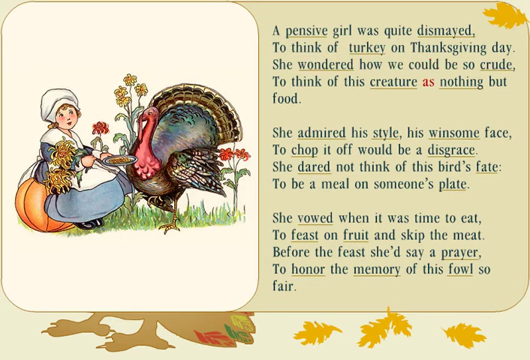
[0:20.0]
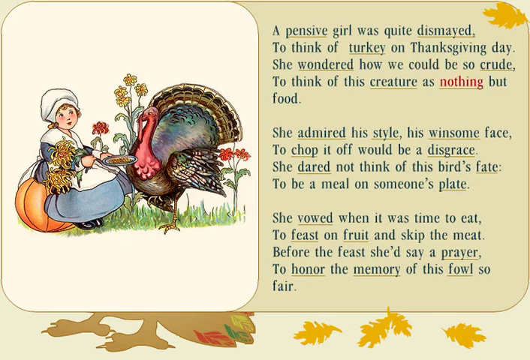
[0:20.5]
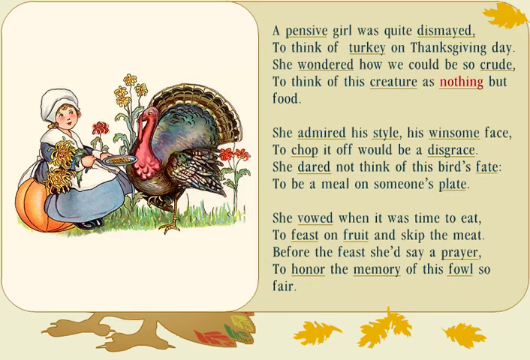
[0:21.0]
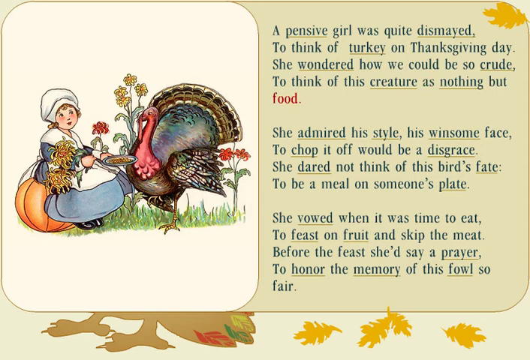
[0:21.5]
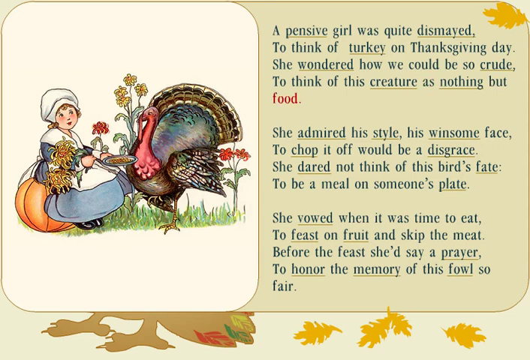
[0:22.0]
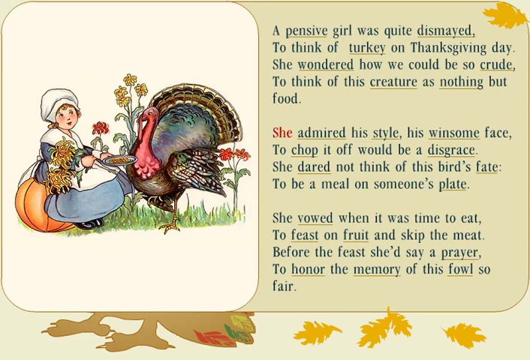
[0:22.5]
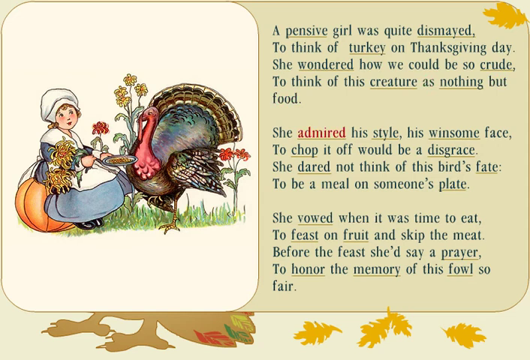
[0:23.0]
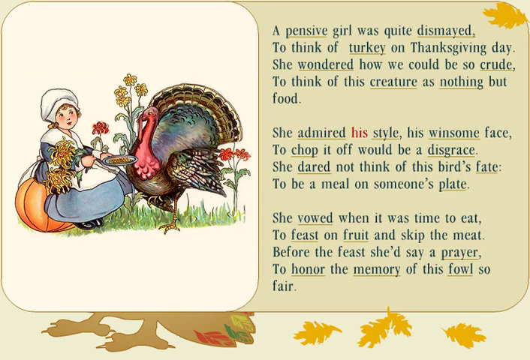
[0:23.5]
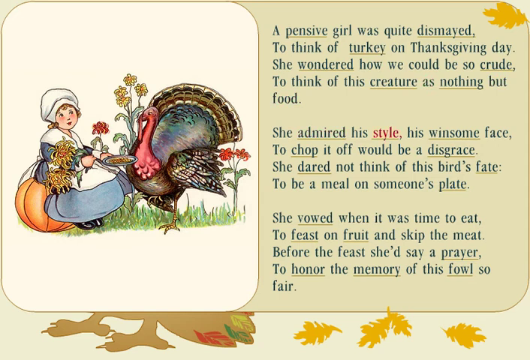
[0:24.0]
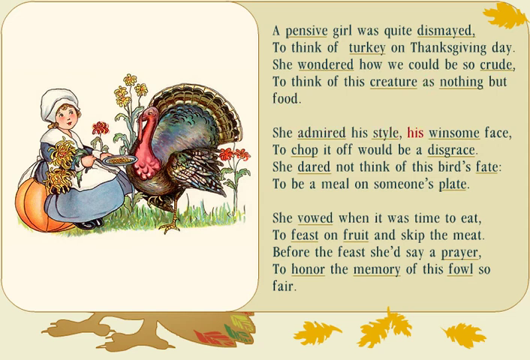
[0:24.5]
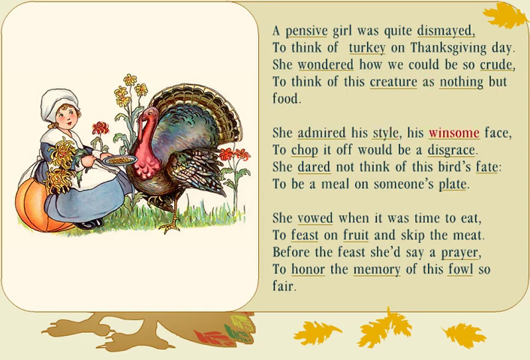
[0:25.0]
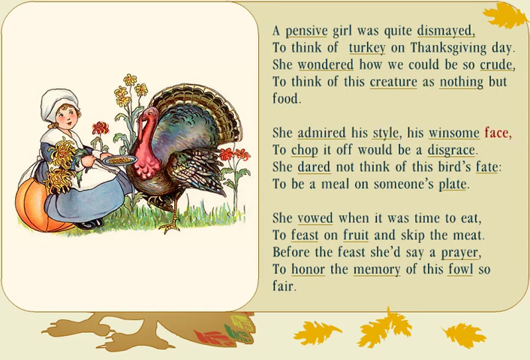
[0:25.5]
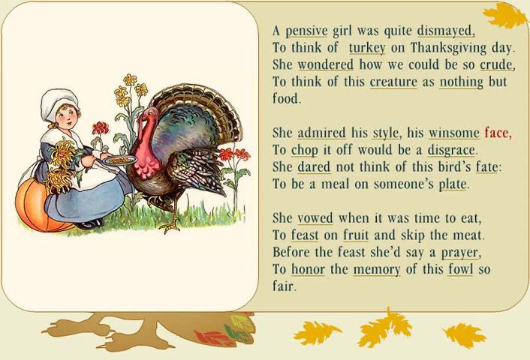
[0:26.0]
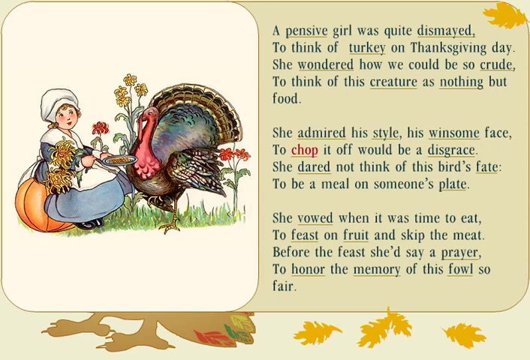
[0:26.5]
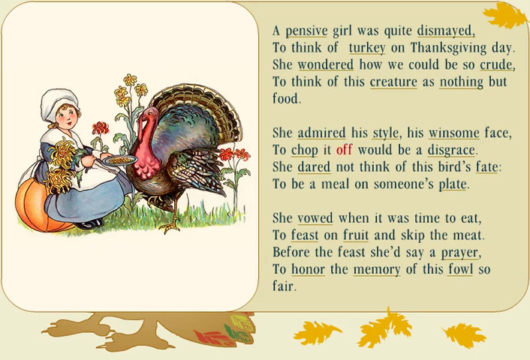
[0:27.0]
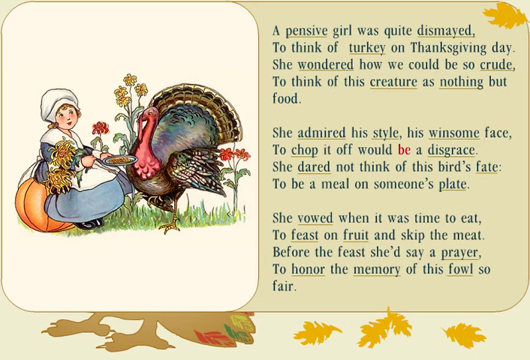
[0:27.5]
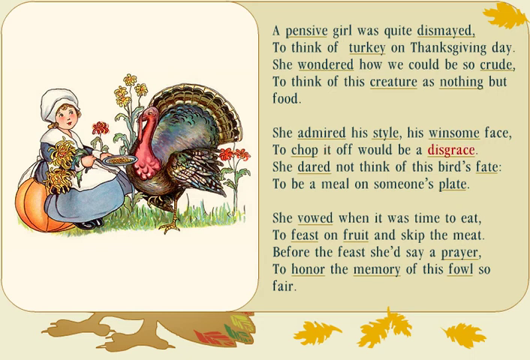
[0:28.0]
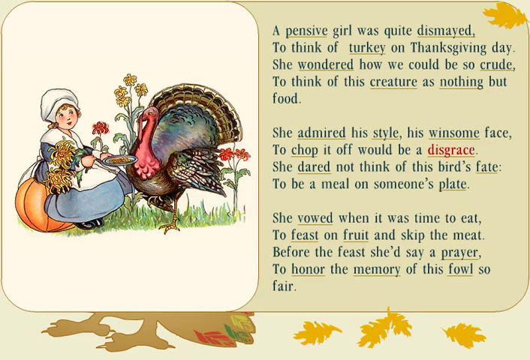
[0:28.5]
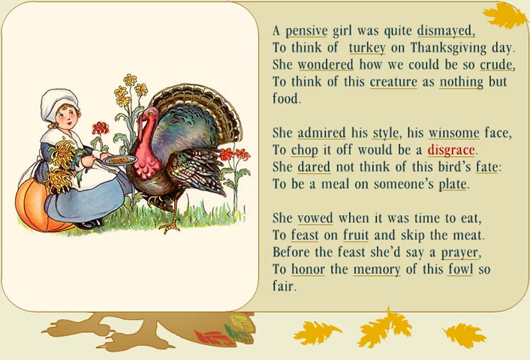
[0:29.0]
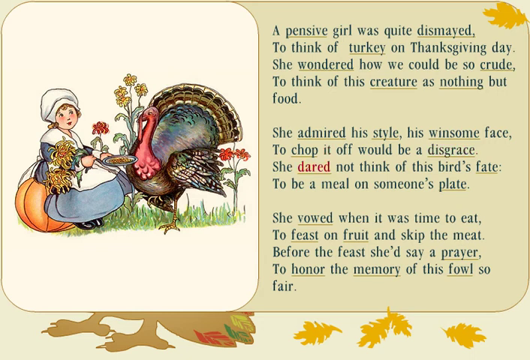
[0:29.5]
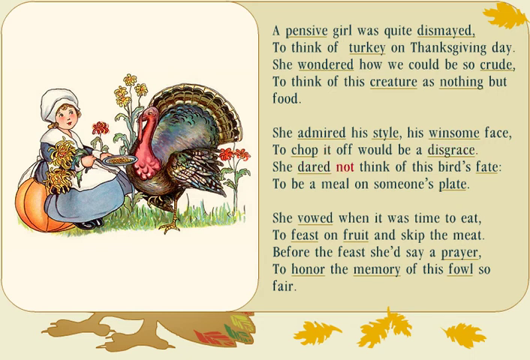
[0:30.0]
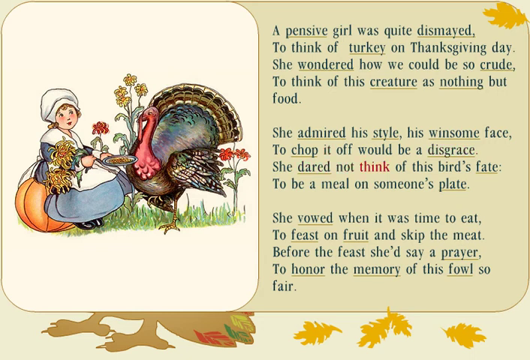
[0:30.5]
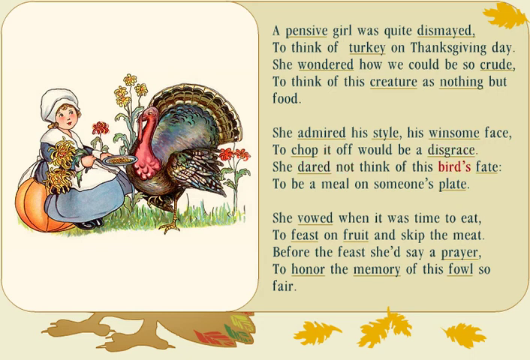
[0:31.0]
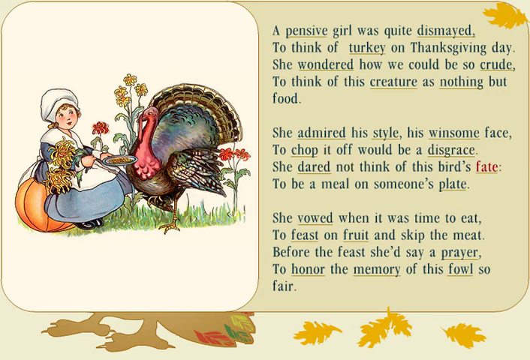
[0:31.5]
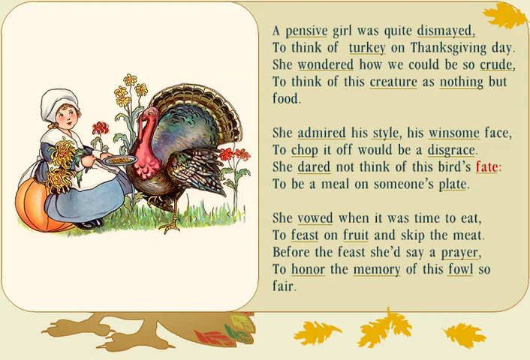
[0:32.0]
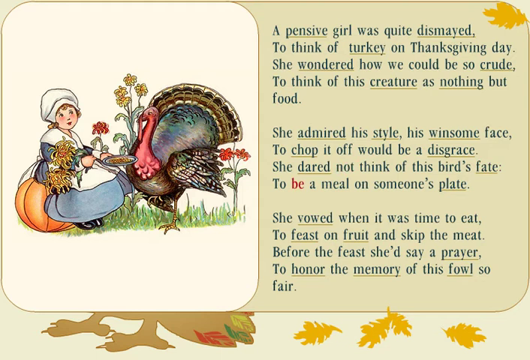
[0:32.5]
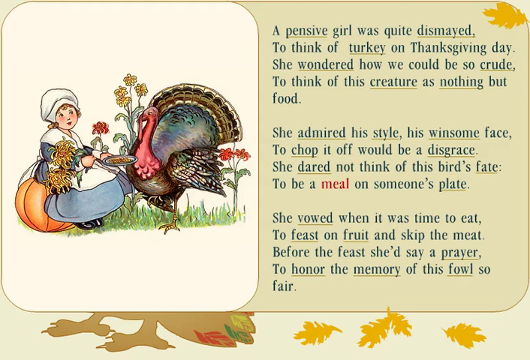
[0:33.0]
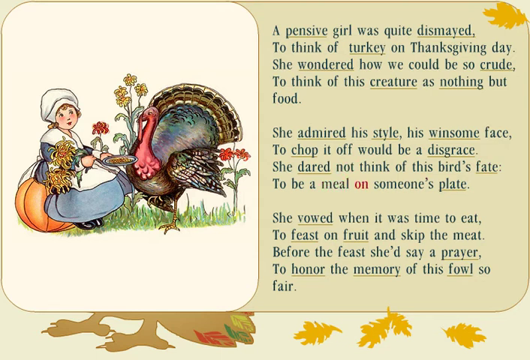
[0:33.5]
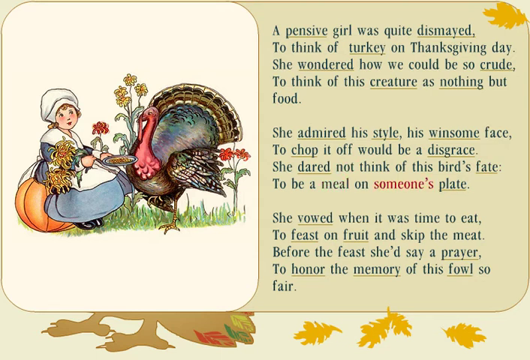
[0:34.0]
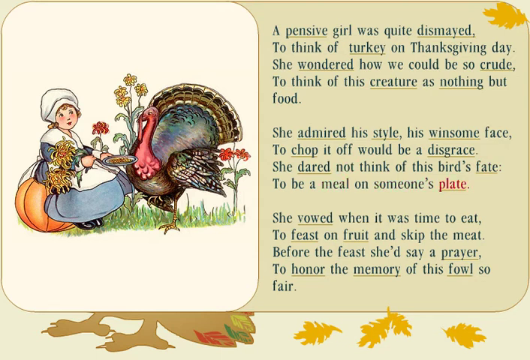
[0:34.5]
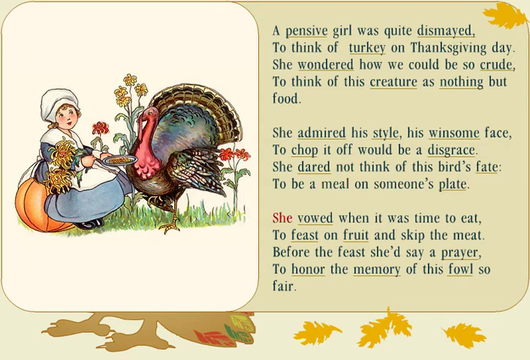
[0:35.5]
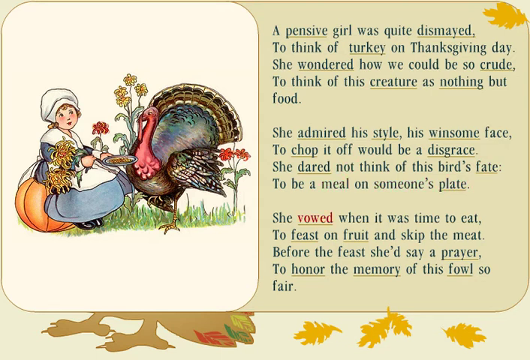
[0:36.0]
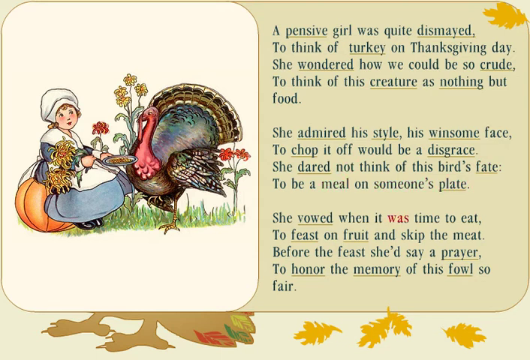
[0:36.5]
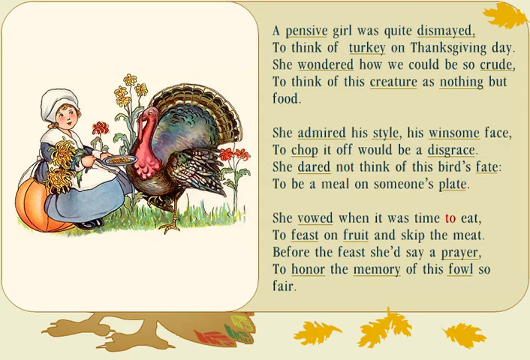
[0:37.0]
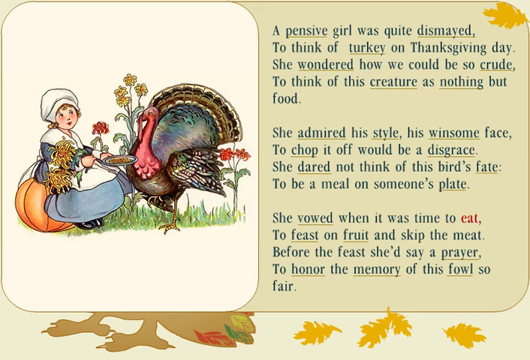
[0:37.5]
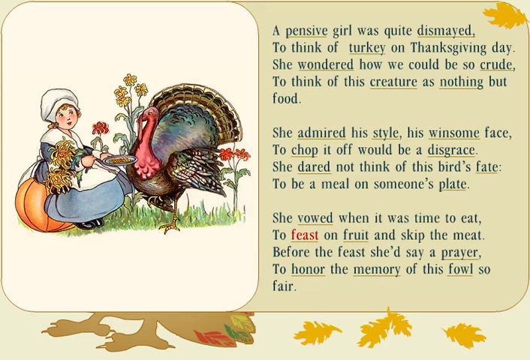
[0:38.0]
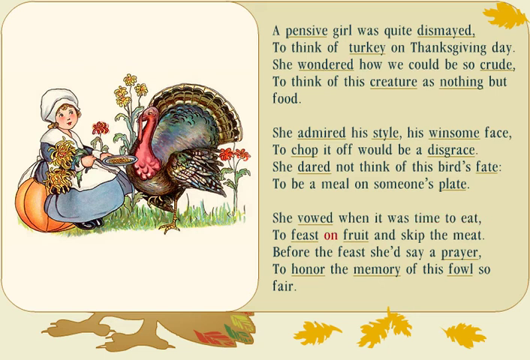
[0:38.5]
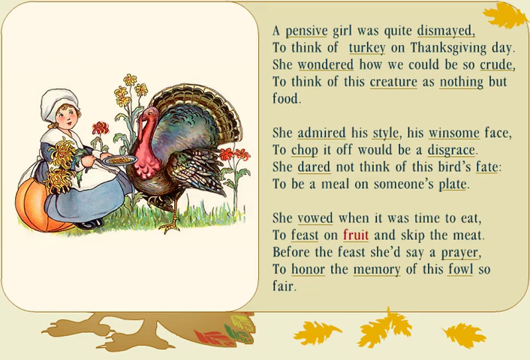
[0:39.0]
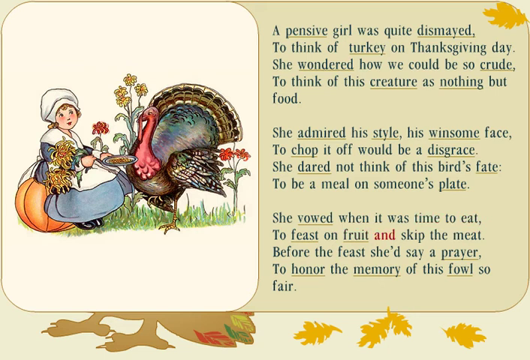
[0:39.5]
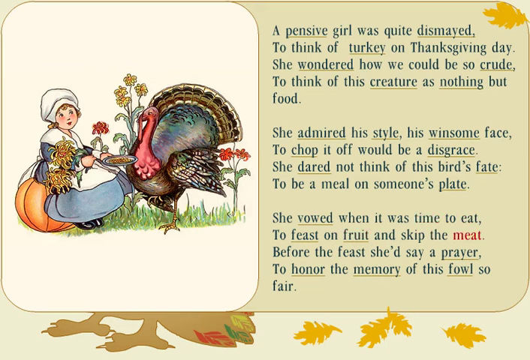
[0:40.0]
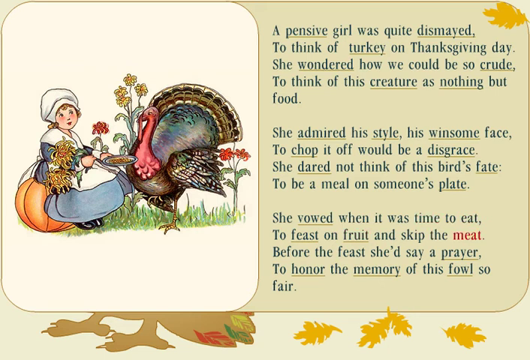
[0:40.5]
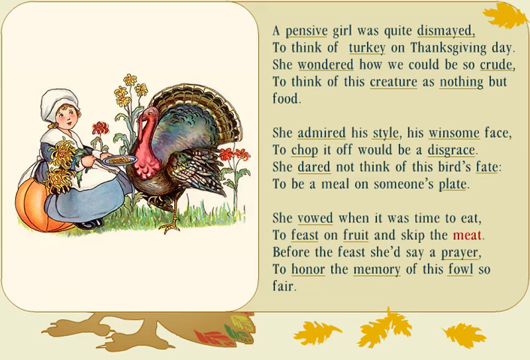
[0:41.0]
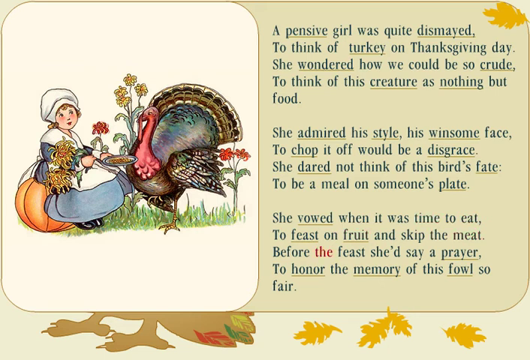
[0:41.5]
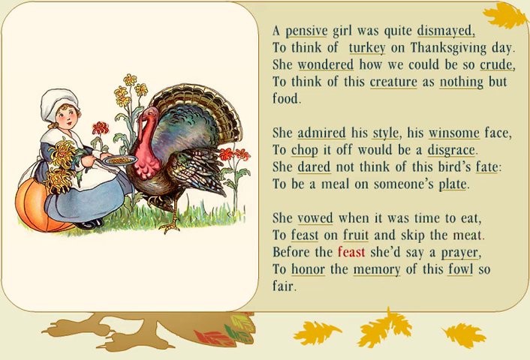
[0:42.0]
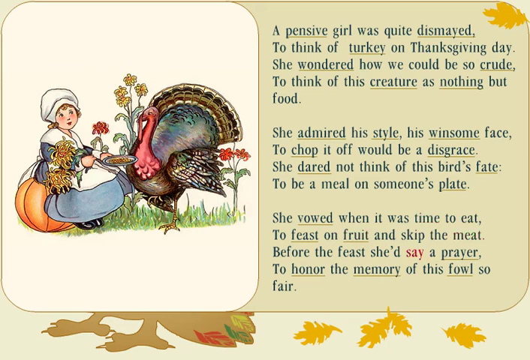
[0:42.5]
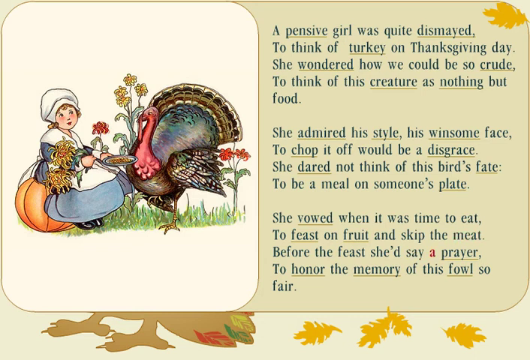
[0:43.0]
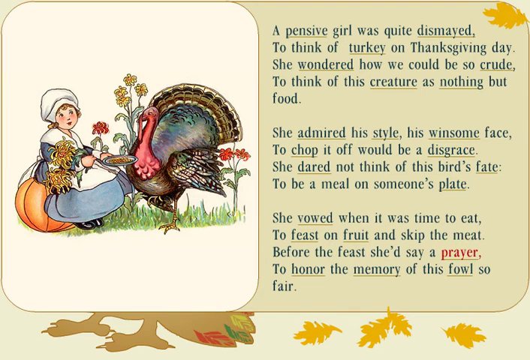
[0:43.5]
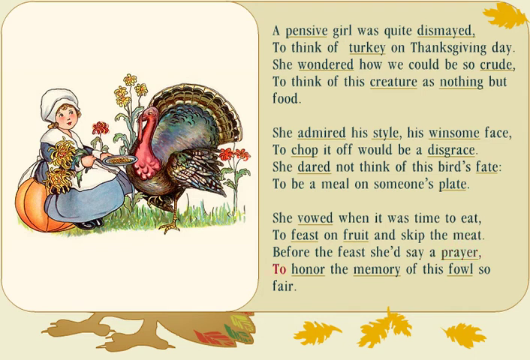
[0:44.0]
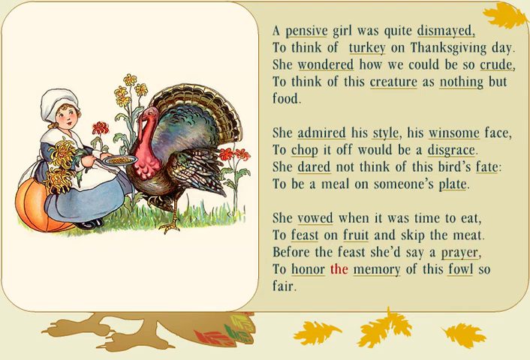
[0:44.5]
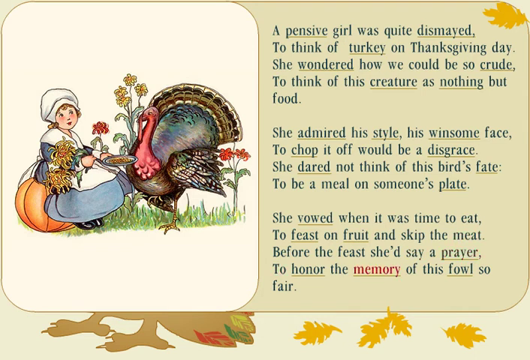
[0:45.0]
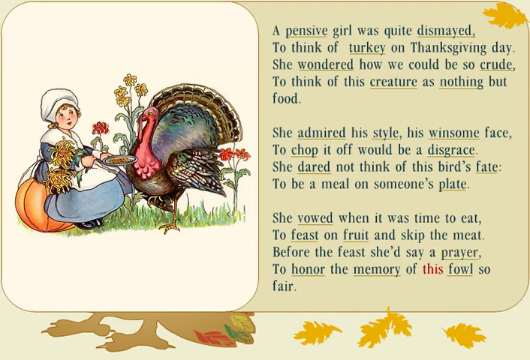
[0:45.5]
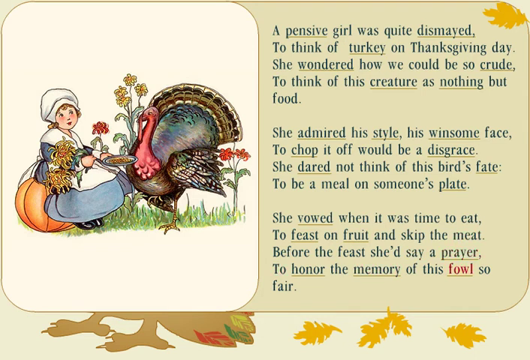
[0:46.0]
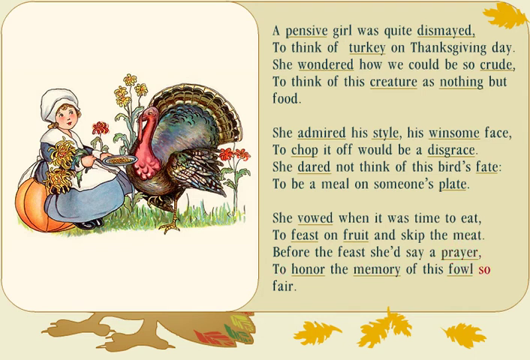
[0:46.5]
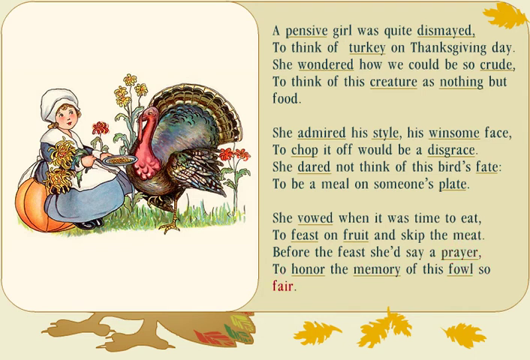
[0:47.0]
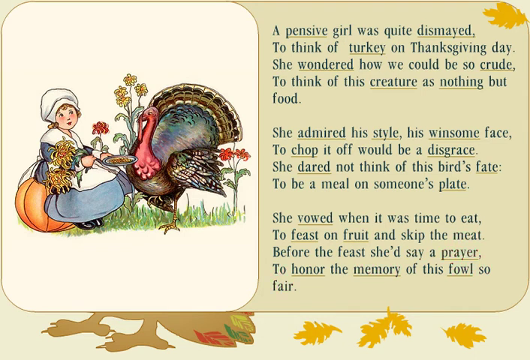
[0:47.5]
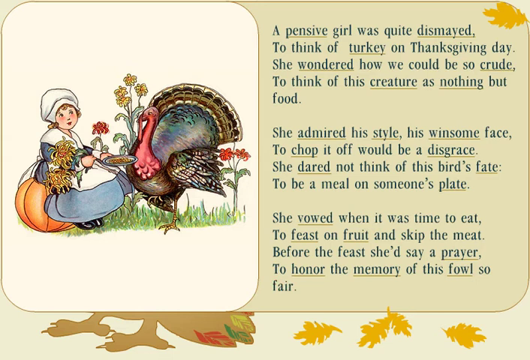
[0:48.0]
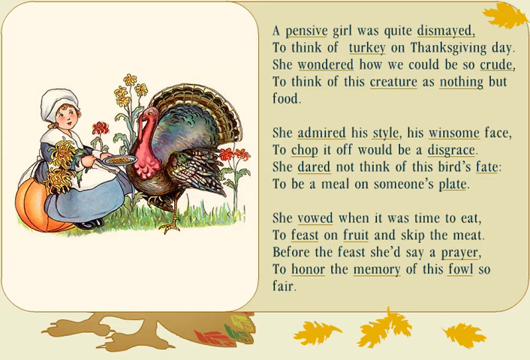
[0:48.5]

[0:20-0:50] The same screen remains, with the girl in the blue dress sitting on top of the pumpkin and a turkey on the right-hand side. The poem is written out in blue writing, and much of it is underlined, apparently for emphasis. It reads: "A handsome girl was quite dismayed to think of turkey on Thanksgiving Day. She wondered how we could be so crude to think of this creature as nothing but food. She admired his style, his winsome face, to chop it off would be a disgrace. She dared not to think of the bird's fate to be a meal on someone's plate. She vowed when it was time to eat to feast on food and skip the meat." The final line begins "Before the feast she'd say a prayer to honor the memory of this."